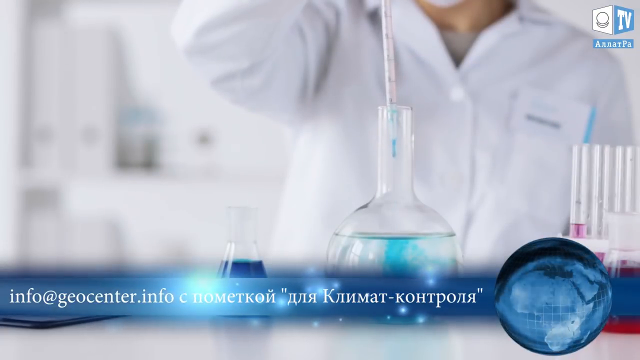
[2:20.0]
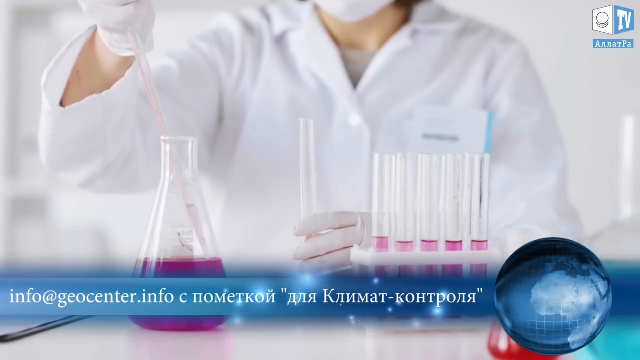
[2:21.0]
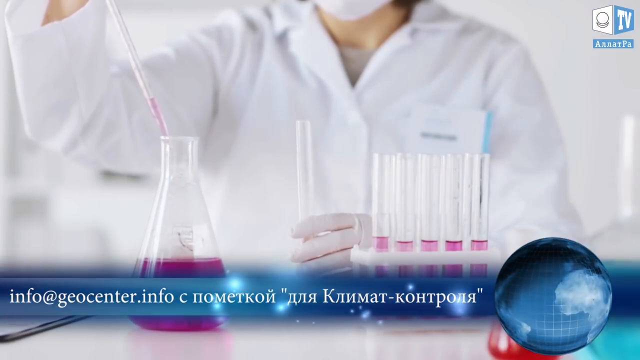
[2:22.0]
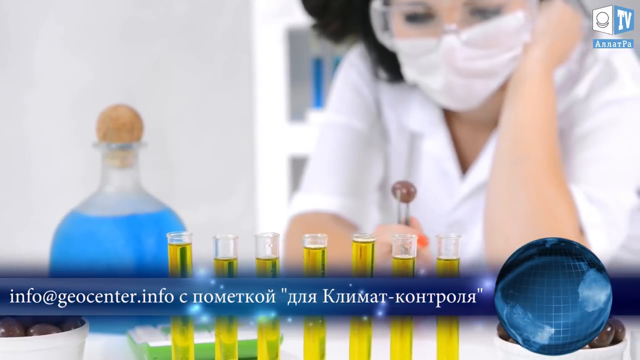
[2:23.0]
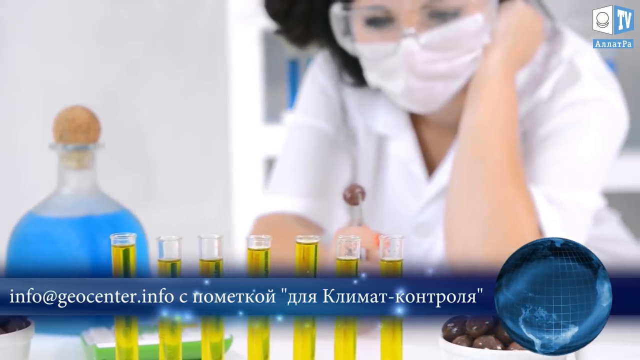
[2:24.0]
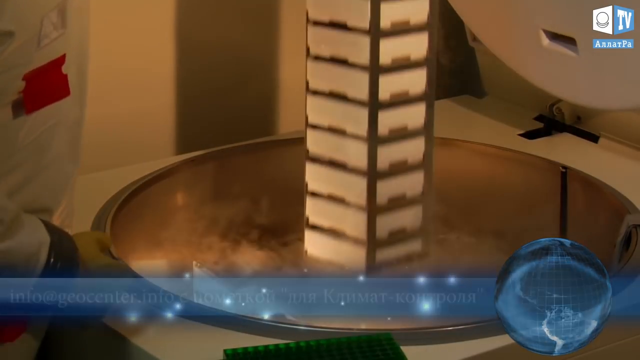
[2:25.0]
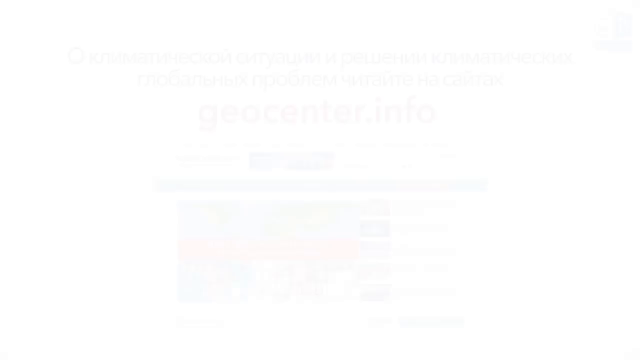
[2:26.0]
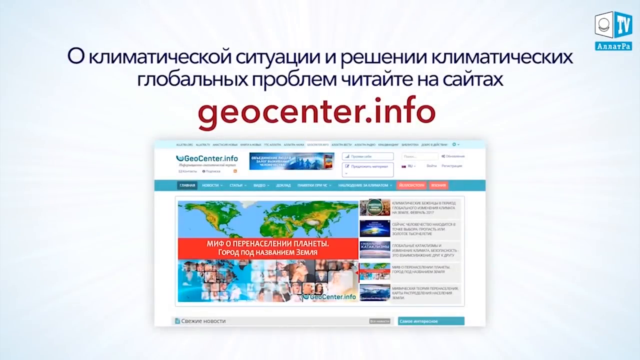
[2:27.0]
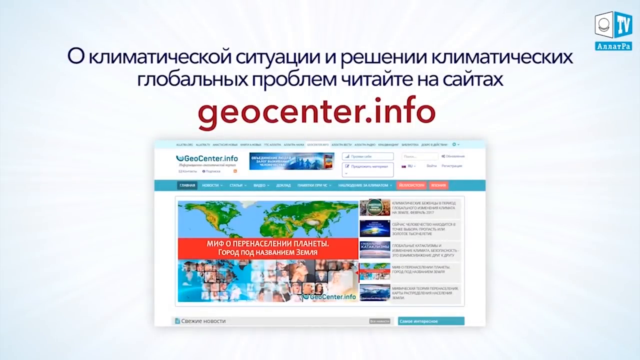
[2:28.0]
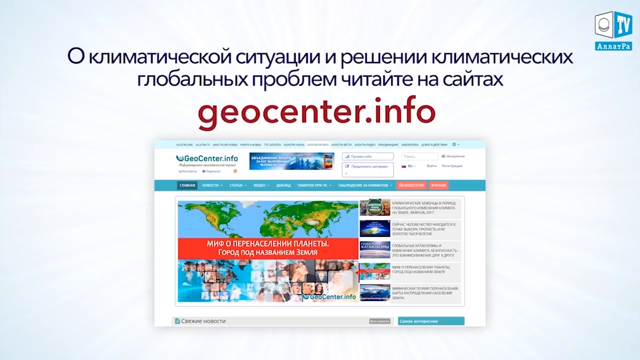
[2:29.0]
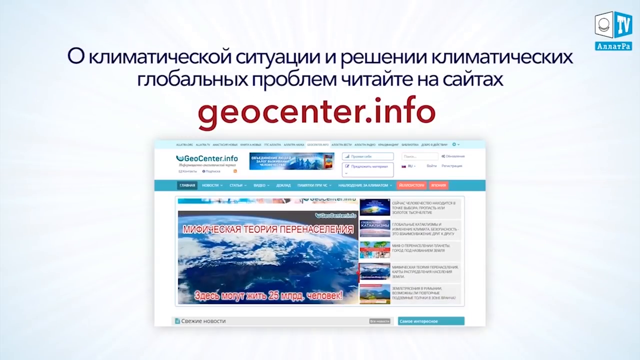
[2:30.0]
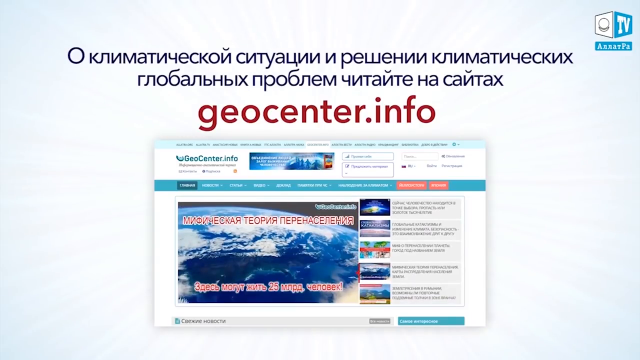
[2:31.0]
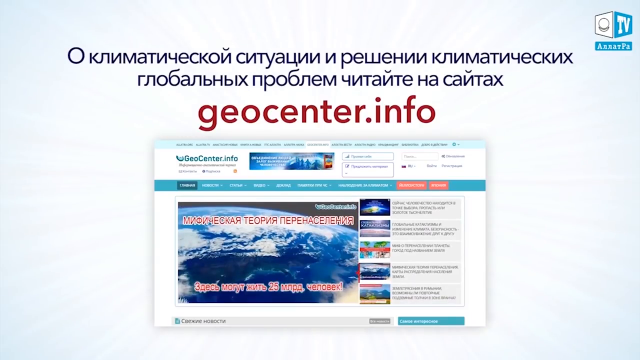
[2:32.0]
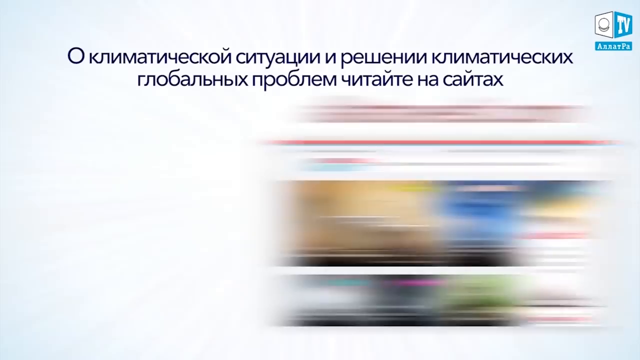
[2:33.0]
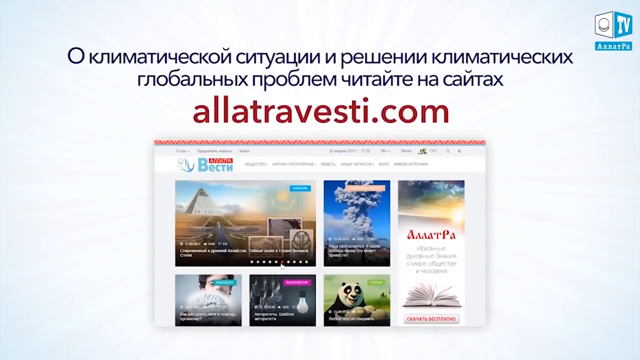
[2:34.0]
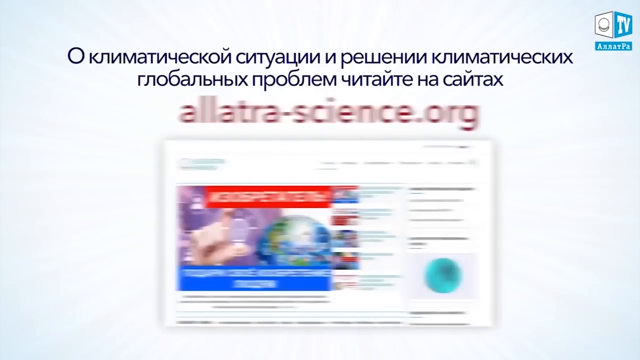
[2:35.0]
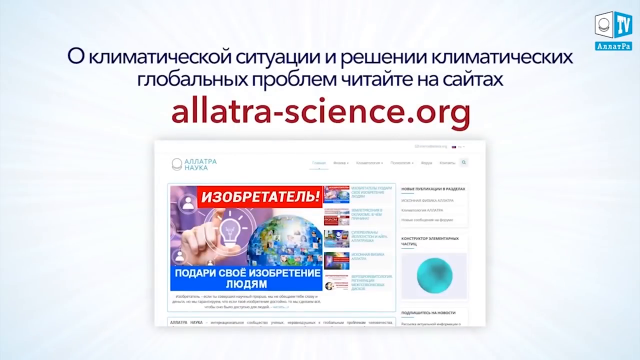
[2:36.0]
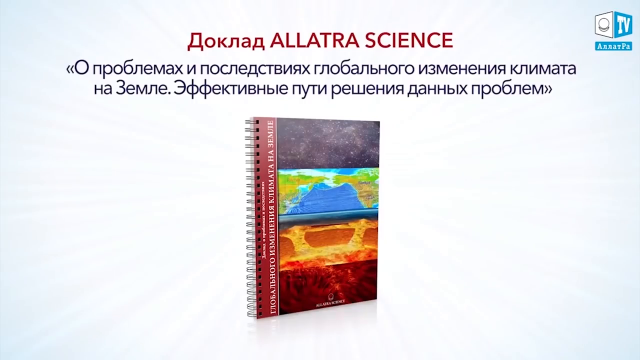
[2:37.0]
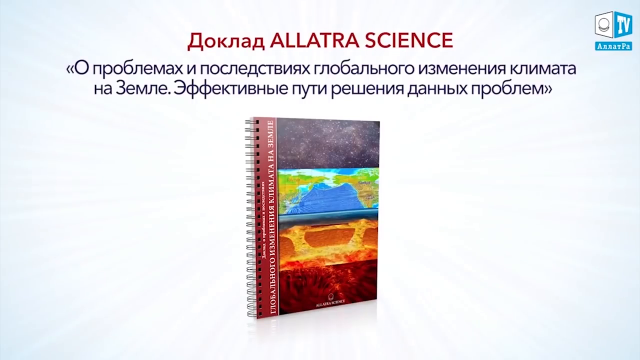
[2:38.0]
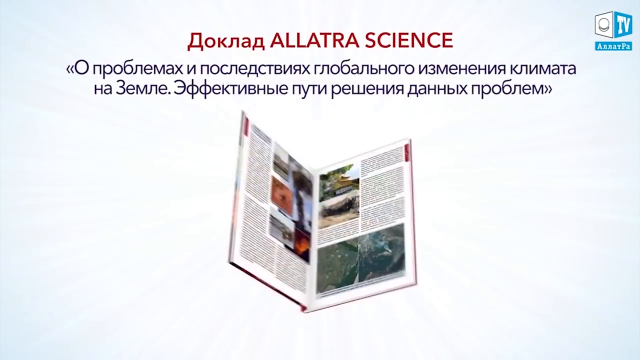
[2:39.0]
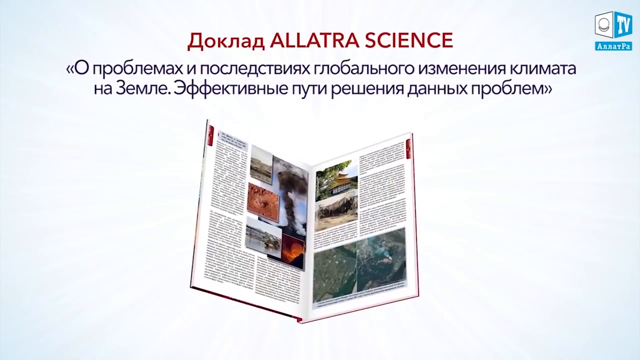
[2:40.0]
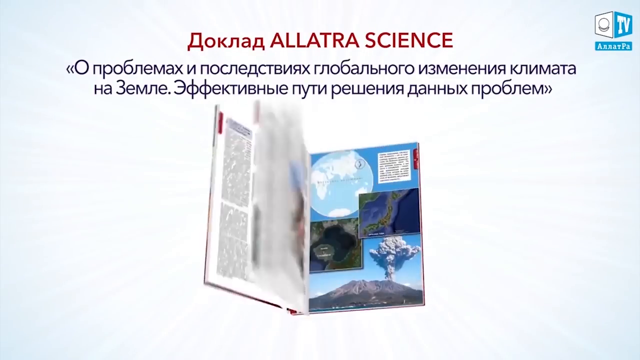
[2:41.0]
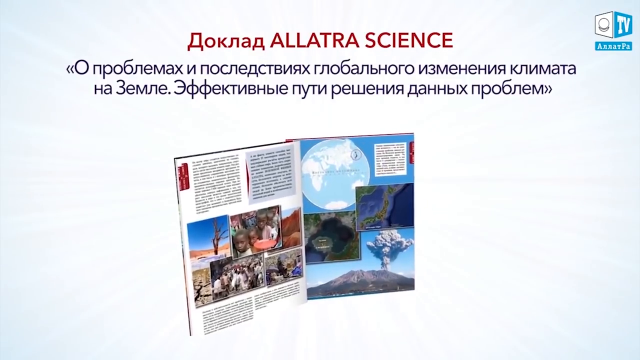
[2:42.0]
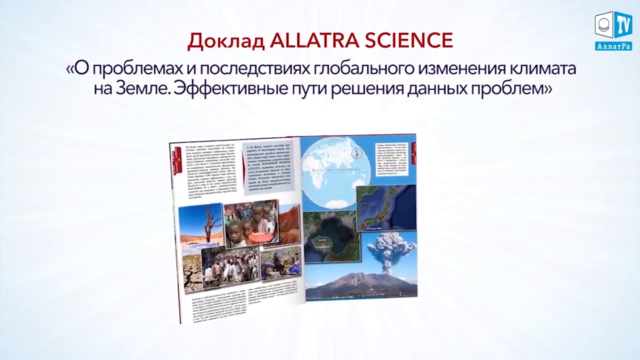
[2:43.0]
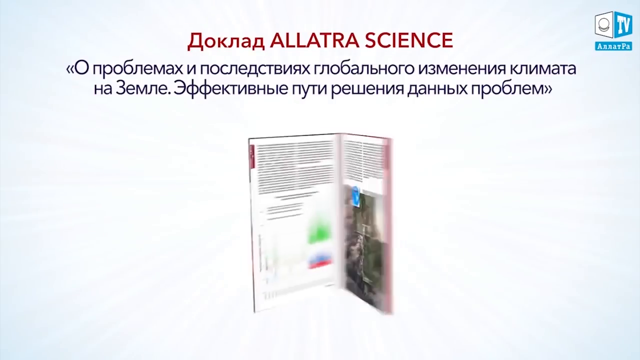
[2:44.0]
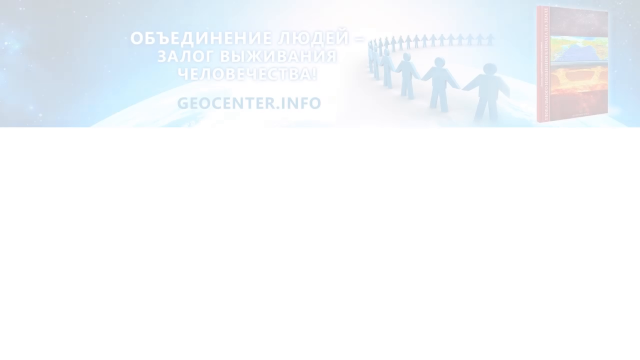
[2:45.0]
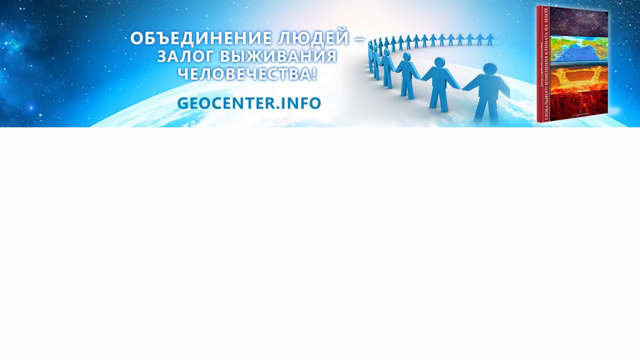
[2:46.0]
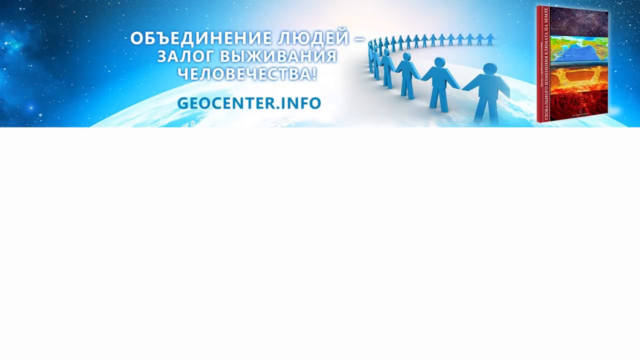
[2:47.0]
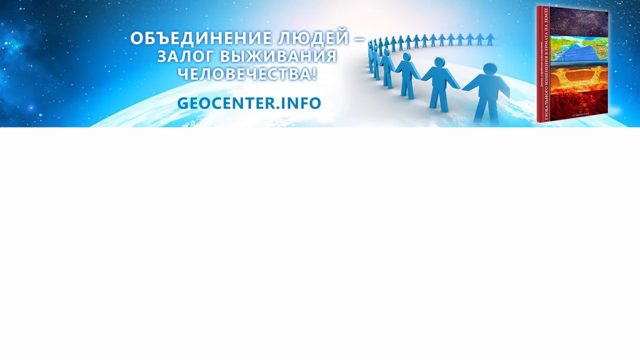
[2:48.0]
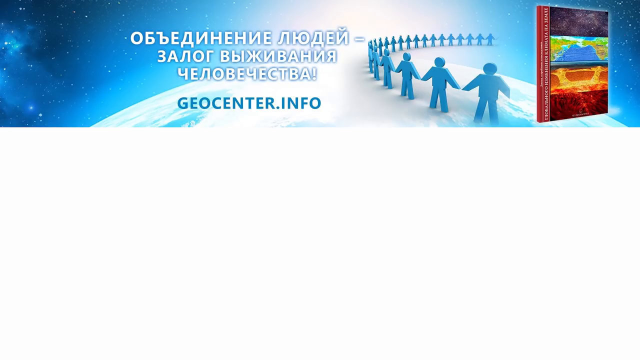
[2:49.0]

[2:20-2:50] The letters in blue appear. The blue tile mat seen at the start is very sparkly and shiny, laid out in a community. Three or four large homes are in the background where the mats were laid down. The man is in his laboratory or office where he makes the octagons, together with another man, with tons of tools and different materials in the background. An animation shows a very dark, all-black sky, with cars running in and out of an intersection and something kind of like the octagons he made. Then blue water drips, and a creek is shown.